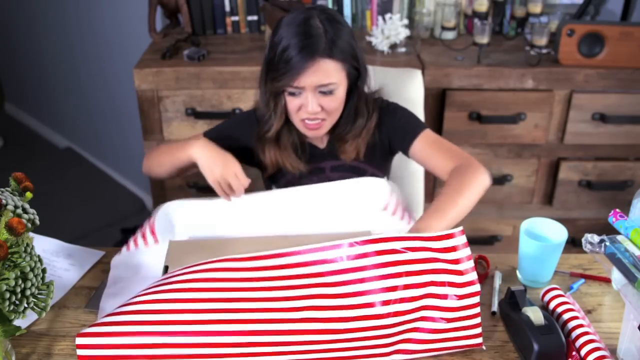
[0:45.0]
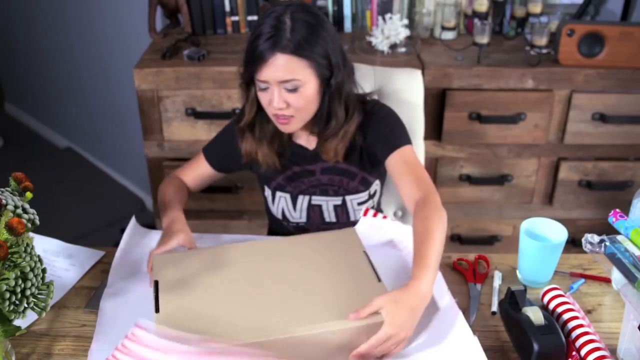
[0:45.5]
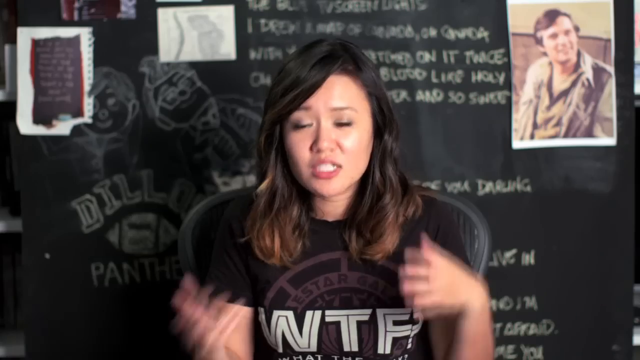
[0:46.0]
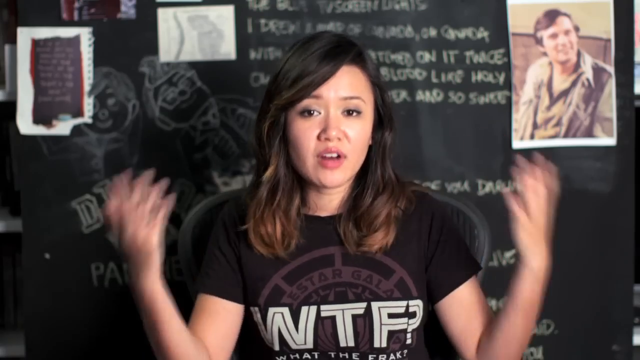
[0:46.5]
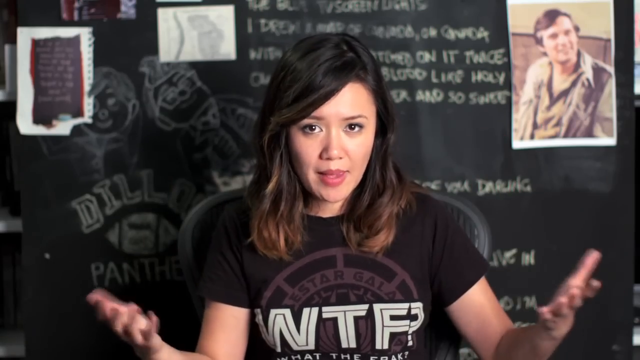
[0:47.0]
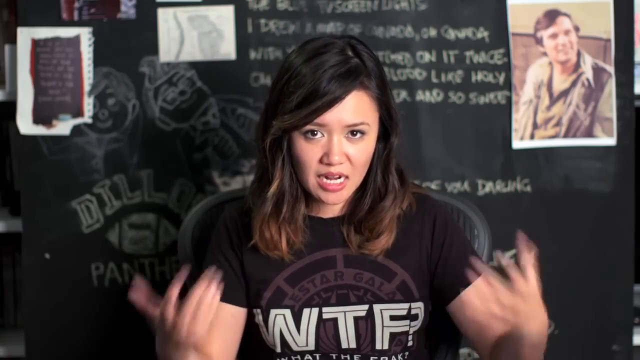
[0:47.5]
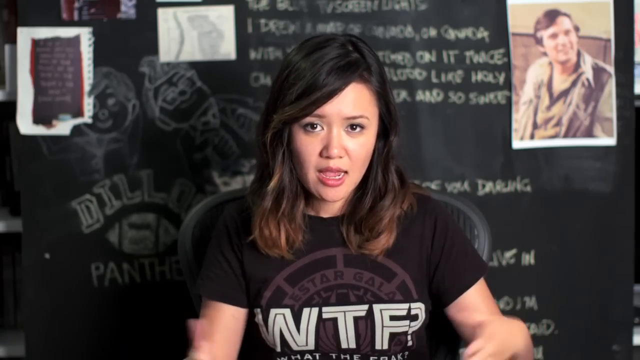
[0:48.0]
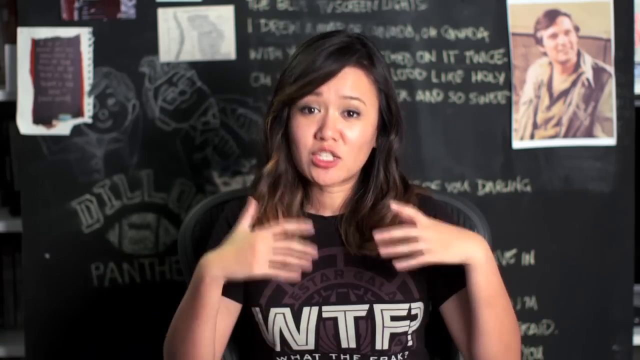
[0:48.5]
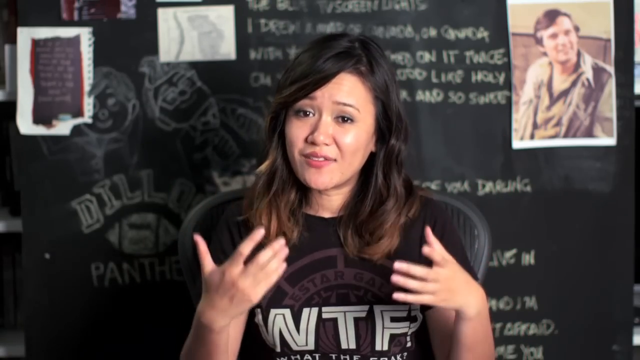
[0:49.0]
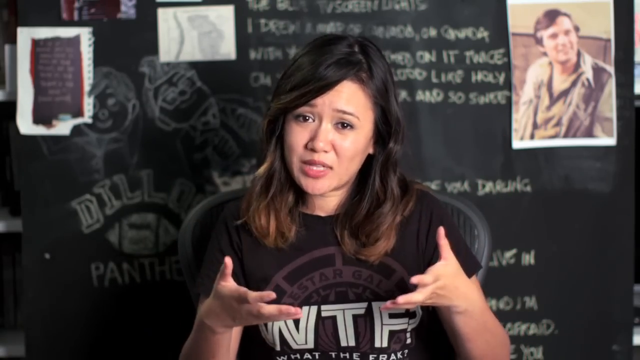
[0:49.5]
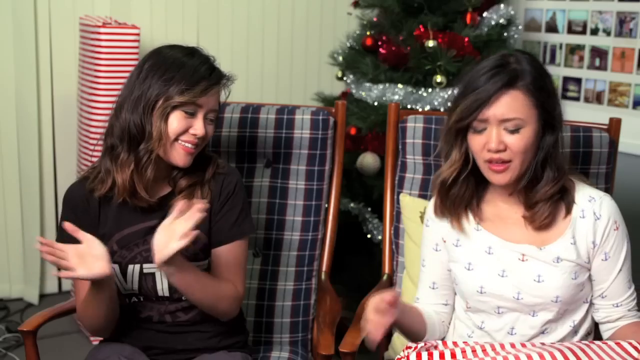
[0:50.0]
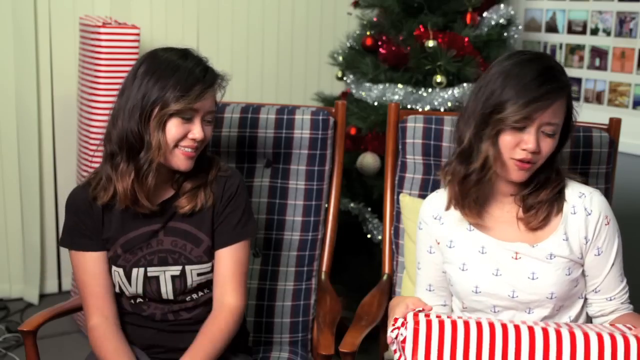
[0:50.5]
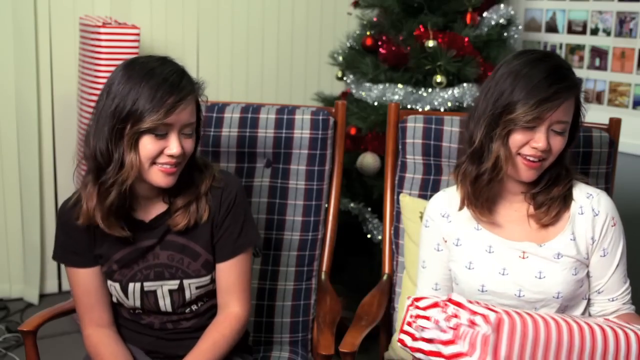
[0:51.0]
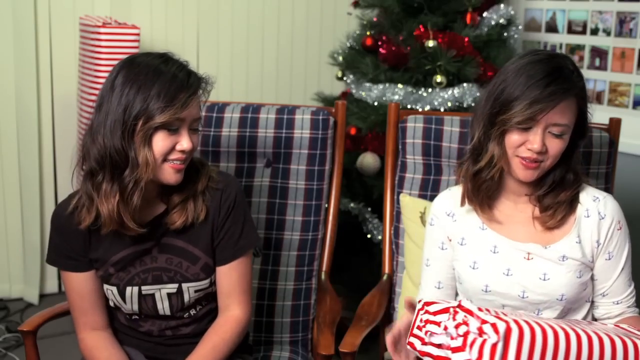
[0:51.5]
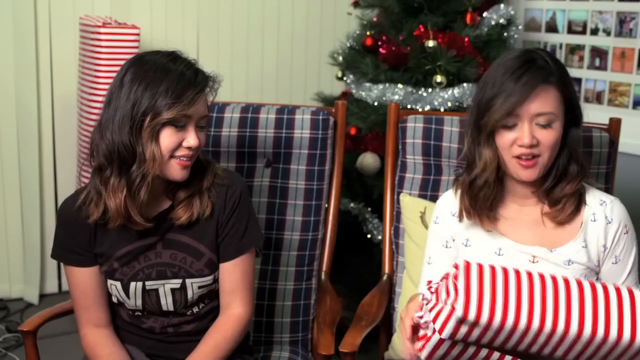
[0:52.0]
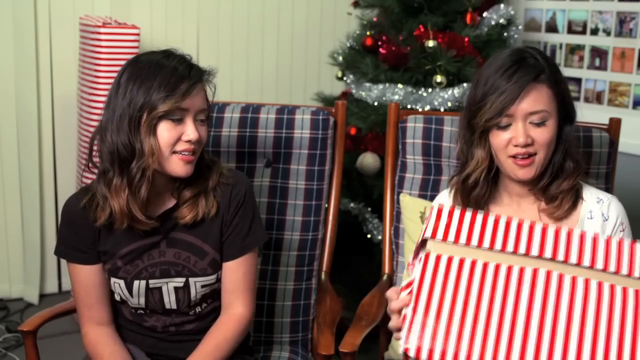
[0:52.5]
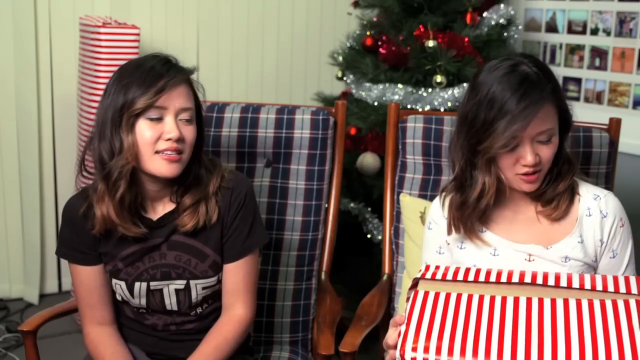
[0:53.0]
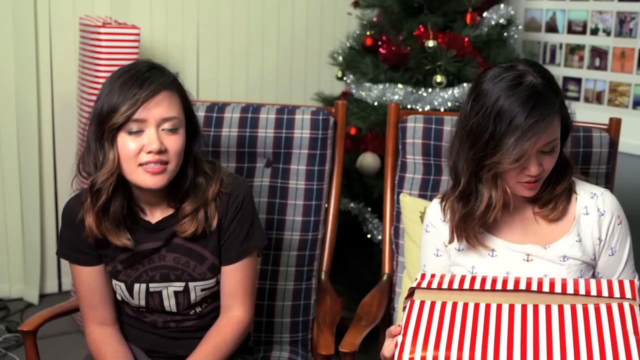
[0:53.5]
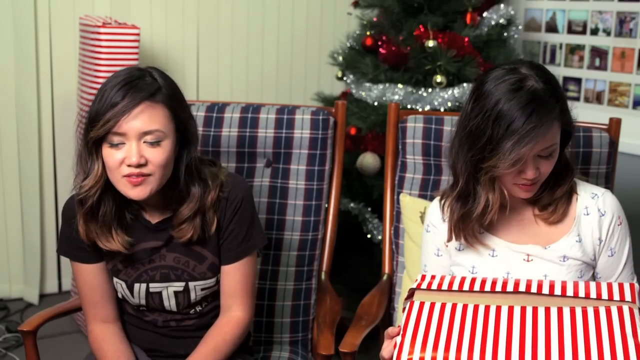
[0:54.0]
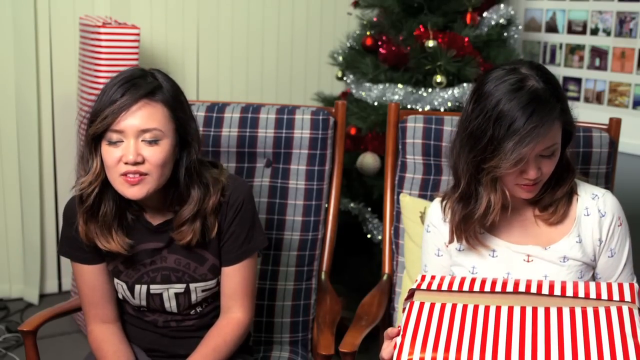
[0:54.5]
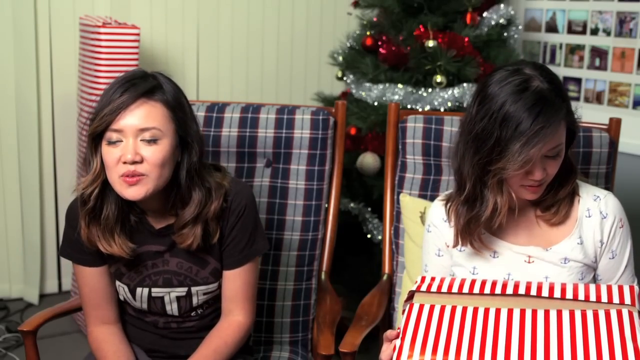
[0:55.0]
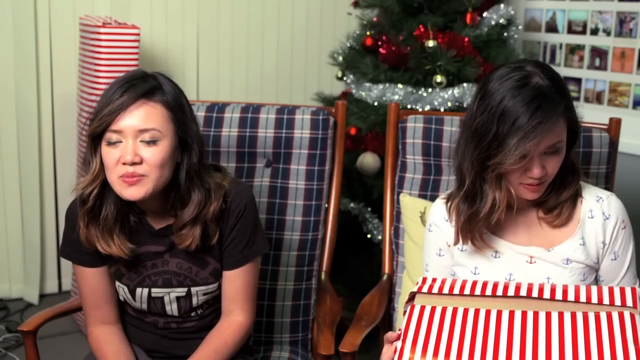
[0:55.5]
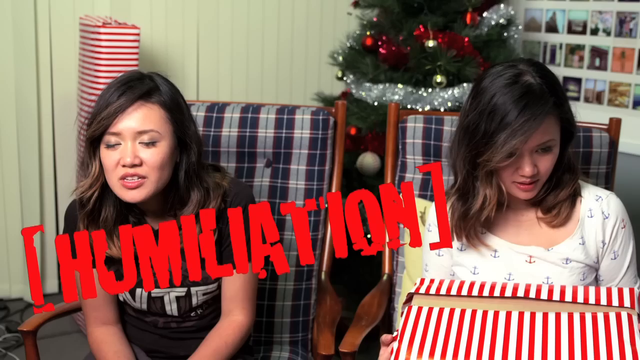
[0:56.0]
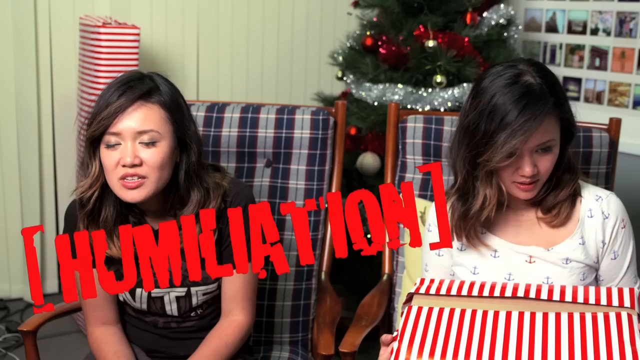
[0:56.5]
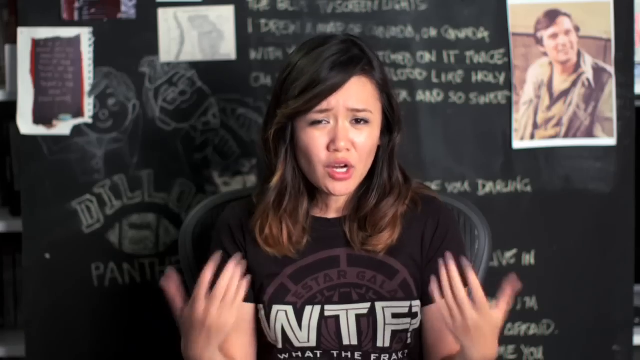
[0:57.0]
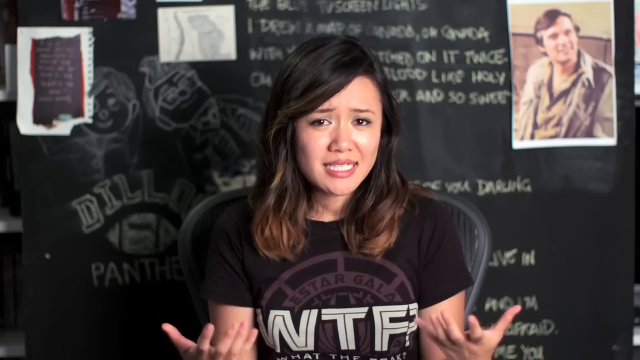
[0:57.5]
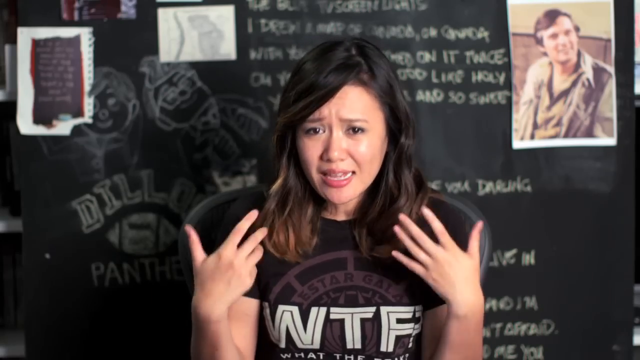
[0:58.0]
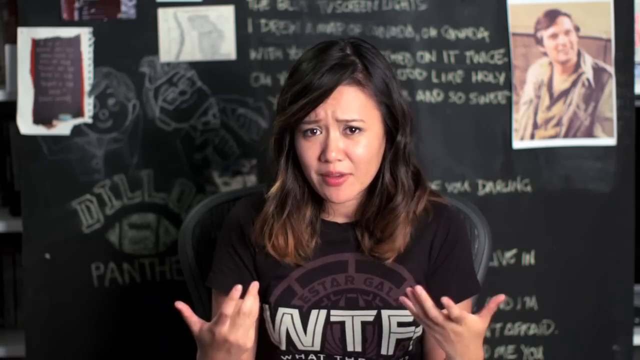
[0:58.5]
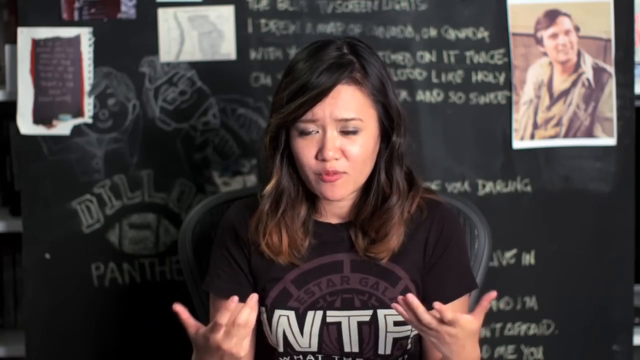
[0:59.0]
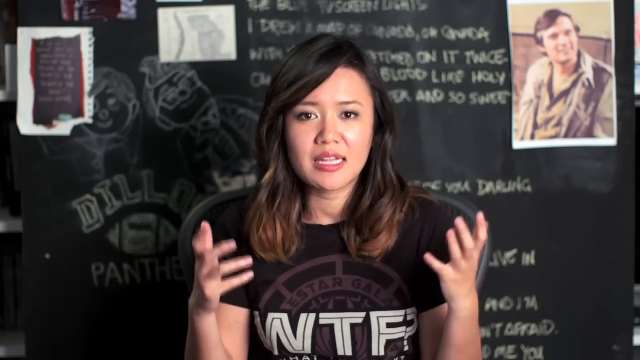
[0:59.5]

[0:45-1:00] She wraps for a second, then speaks, then sits with another girl while holding the package that has the gap in the wrapping paper. The shots alternate repeatedly between her speaking and her with the other girl. The other girl wears a white t-shirt with what are apparently music symbols on it. She kind of sighs heavily, and "humiliation" appears in red kind of across her front. Wrapping paper is behind her seat, and the seats have a sort of blue checkered pattern. She sees the gap at the bottom, kind of does a heavy sigh, and "humiliation" appears underneath her. She speaks with her hands, then hands the package to somebody, sees the gap at the bottom, and kind of heavily sighs; the pattern repeats over and over.